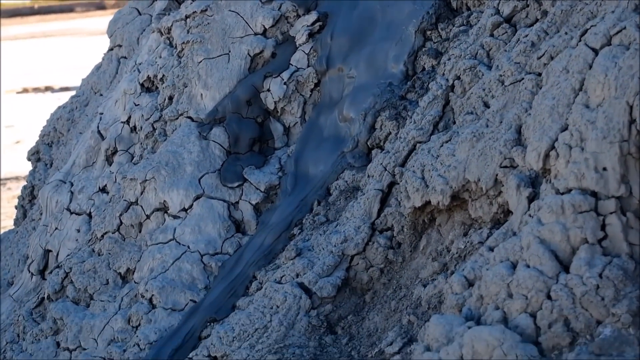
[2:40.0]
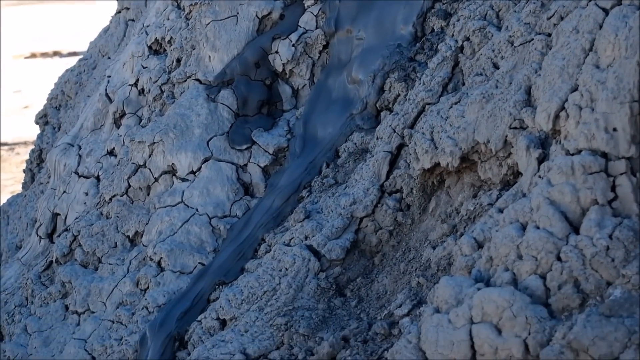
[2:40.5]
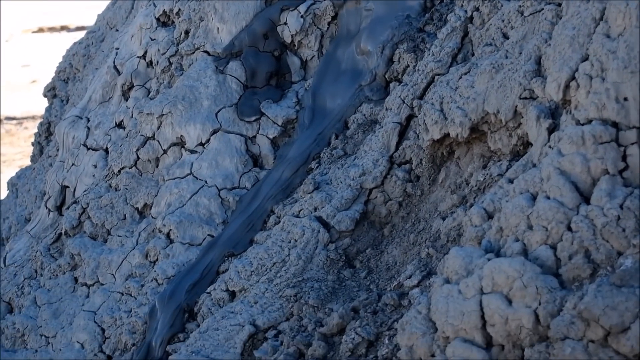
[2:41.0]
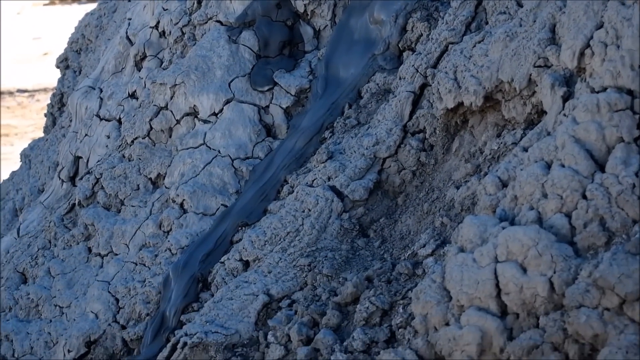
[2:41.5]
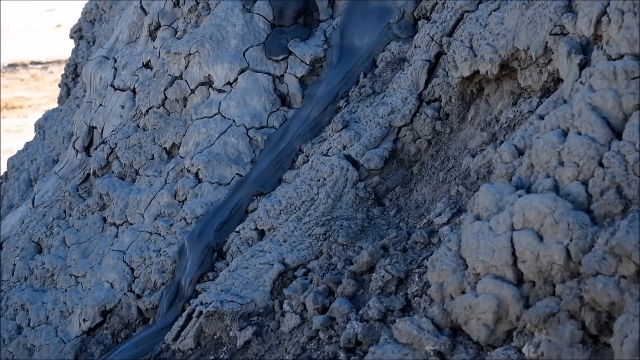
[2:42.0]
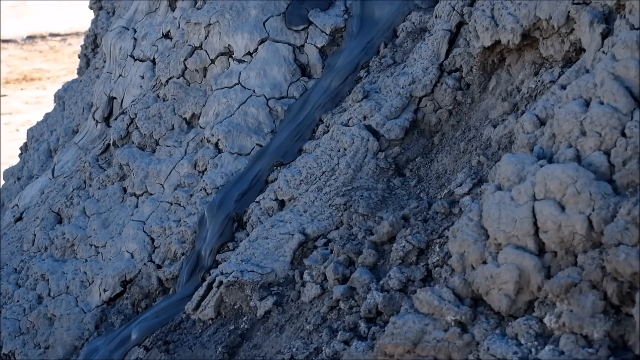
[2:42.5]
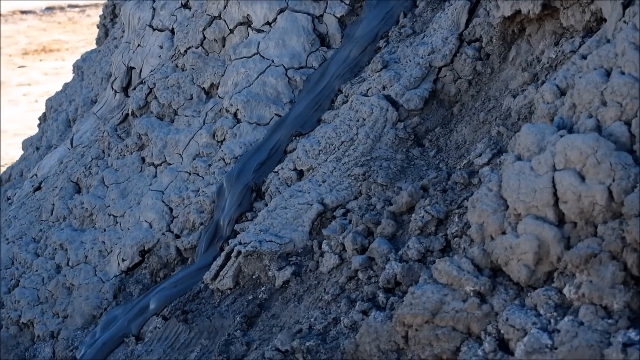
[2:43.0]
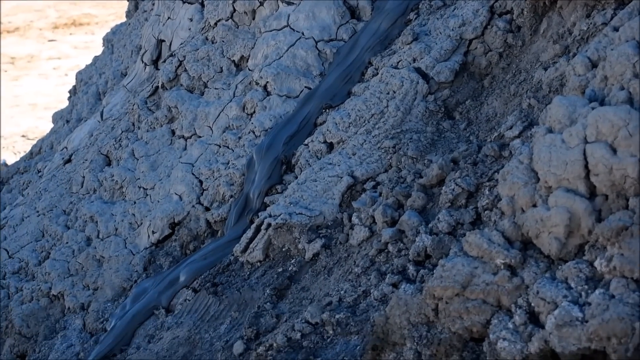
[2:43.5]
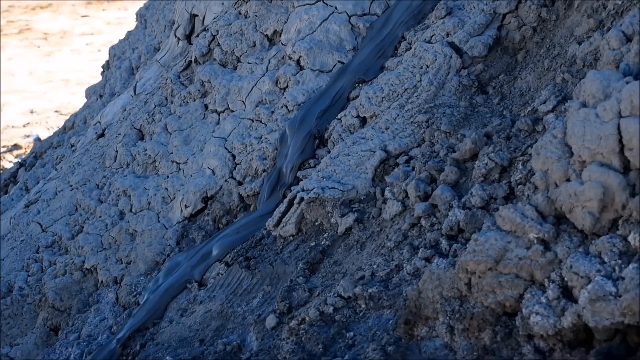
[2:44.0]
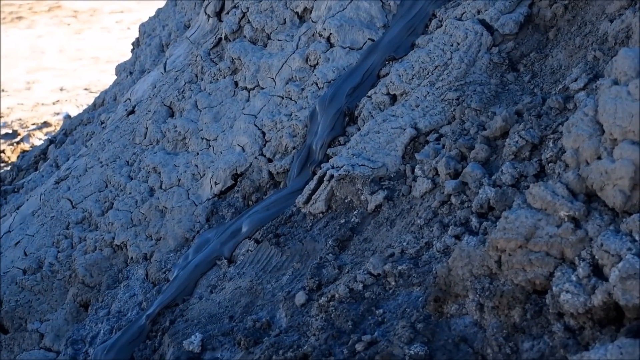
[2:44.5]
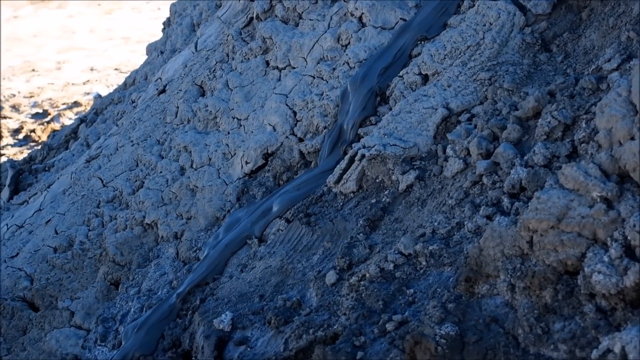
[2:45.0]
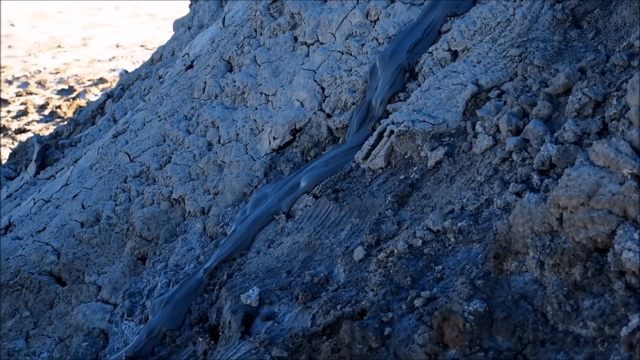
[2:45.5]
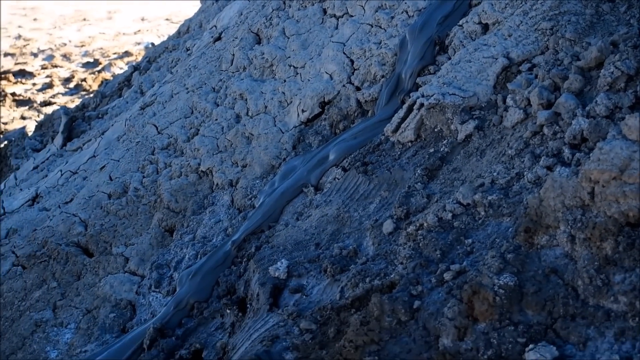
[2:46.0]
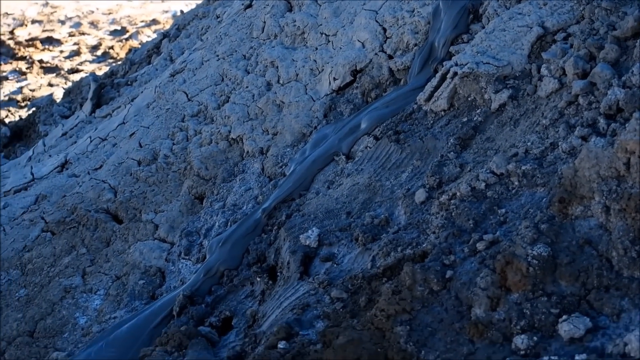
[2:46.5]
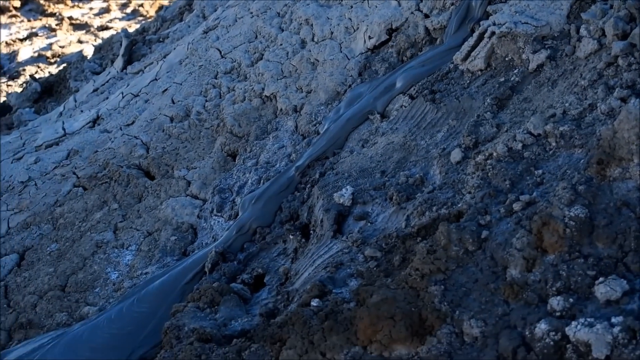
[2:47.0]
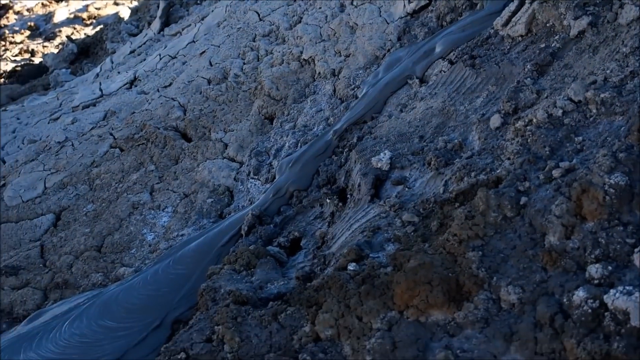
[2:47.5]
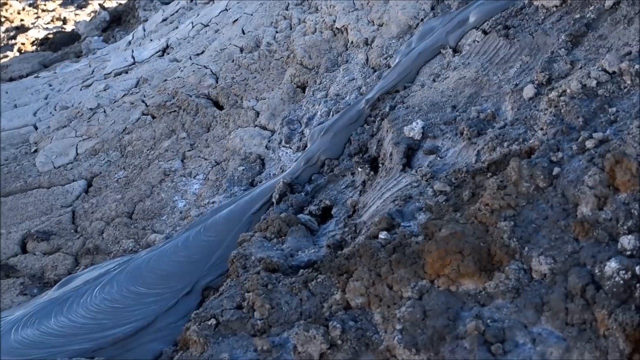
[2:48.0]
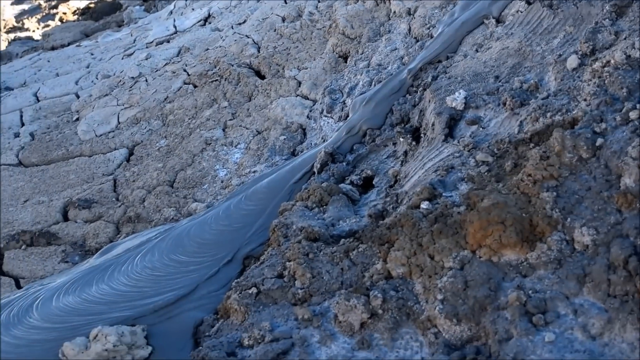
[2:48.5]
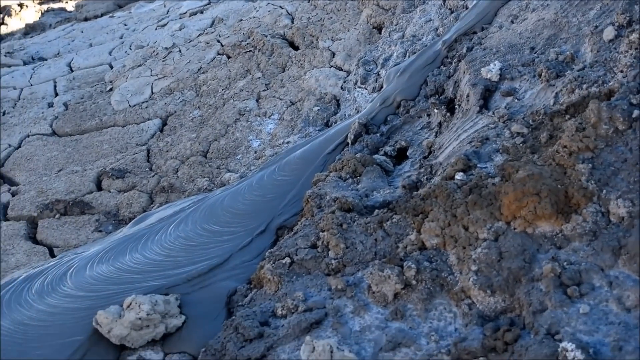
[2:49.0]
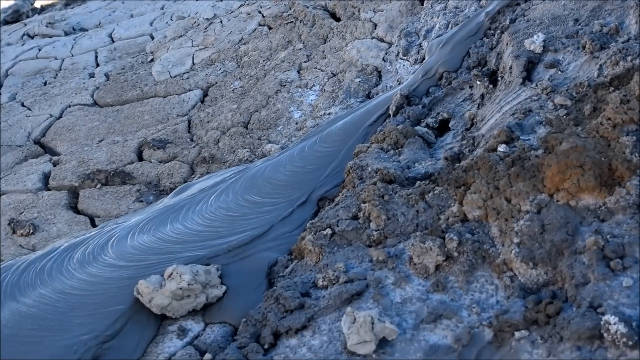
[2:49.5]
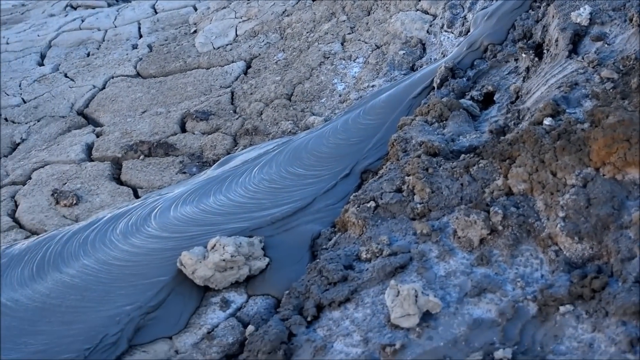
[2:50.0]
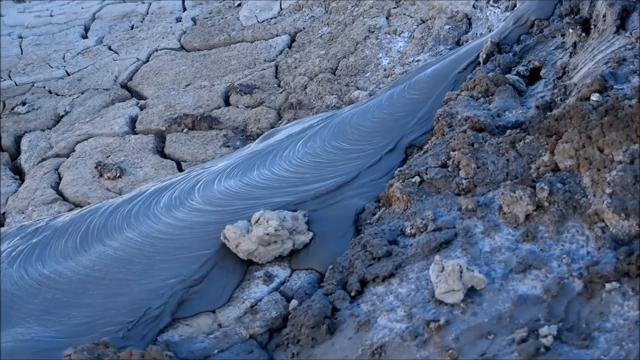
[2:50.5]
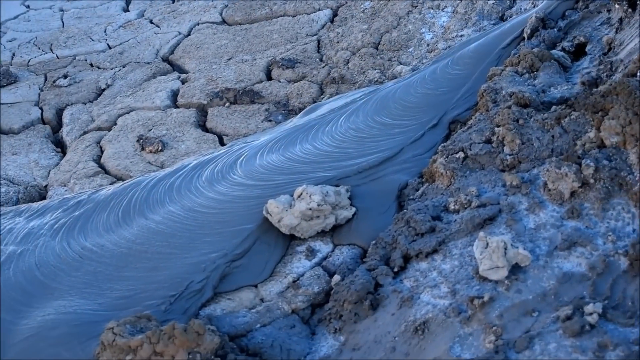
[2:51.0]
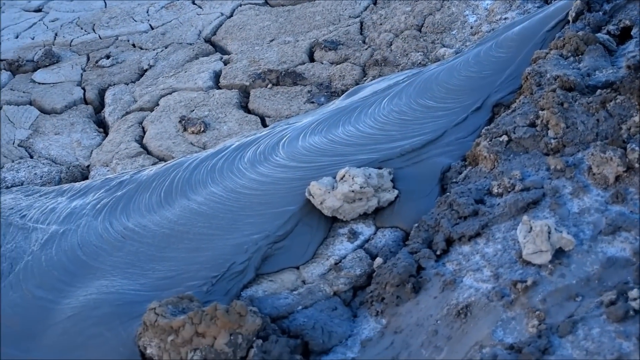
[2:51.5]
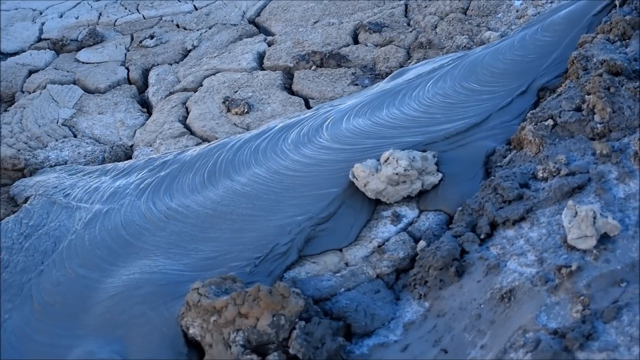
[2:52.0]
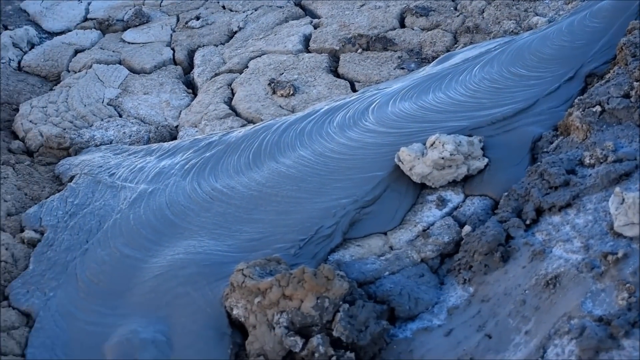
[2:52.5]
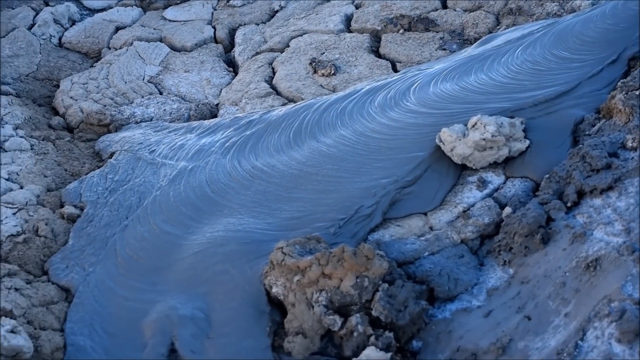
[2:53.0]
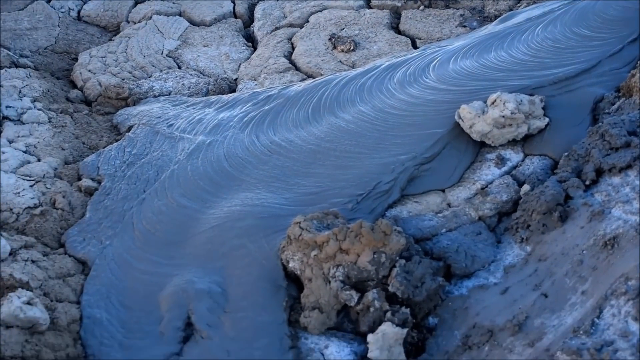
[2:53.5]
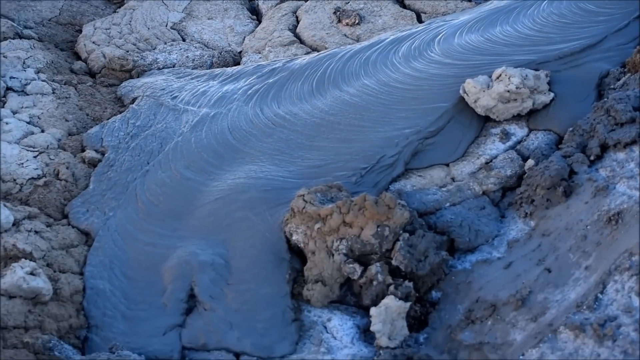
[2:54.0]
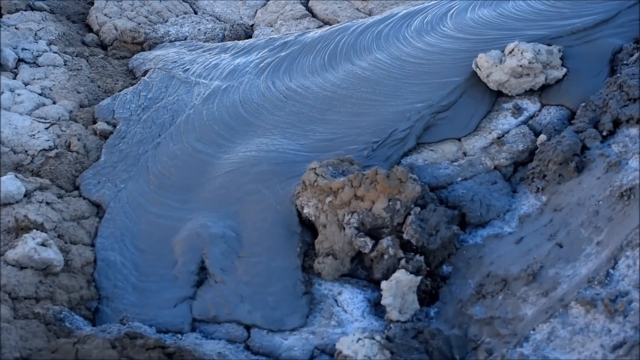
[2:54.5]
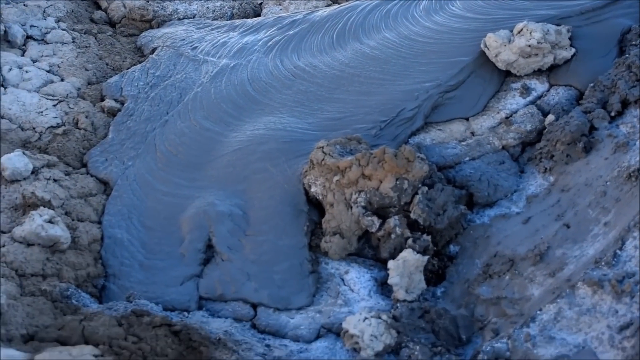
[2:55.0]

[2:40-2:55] A rocky formation is filmed, showing a big rock made mostly of grey, almost white stones with irregular shapes that seem mostly cracked. A black, almost brown substance, mud possibly mixed with clay, drips from its side. As the camera pans from the top of the formation to the bottom, the mud and clay form a clear path down the wall all the way to the ground, where the small trail opens up into a big pool of mud and clay. Mud and clay slip through every visible rock; some rocks are loose, the ground seems to be made of irregularly shaped rocks, and the mud and clay cover everything in that area.